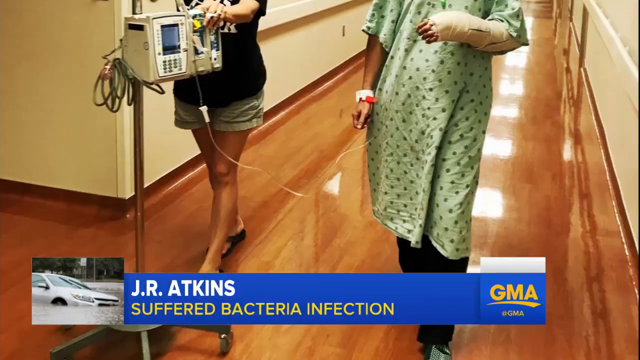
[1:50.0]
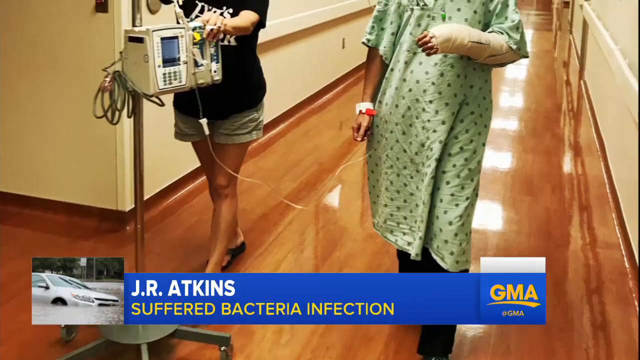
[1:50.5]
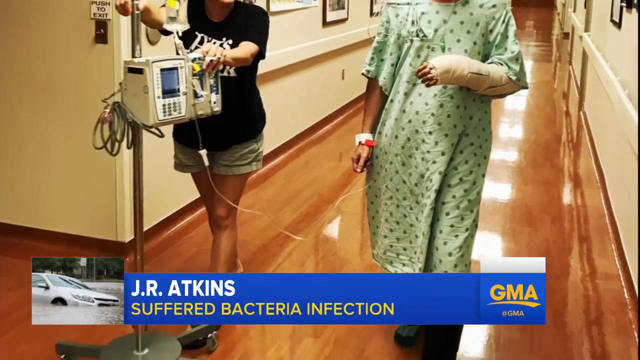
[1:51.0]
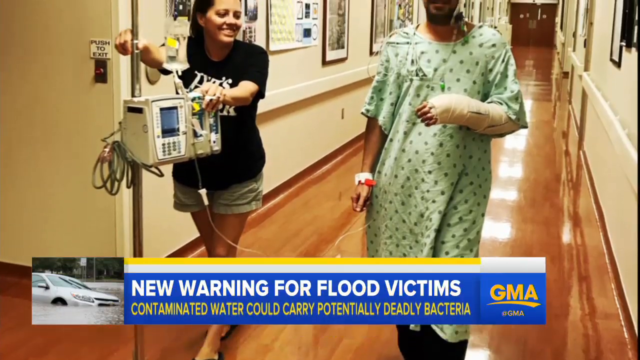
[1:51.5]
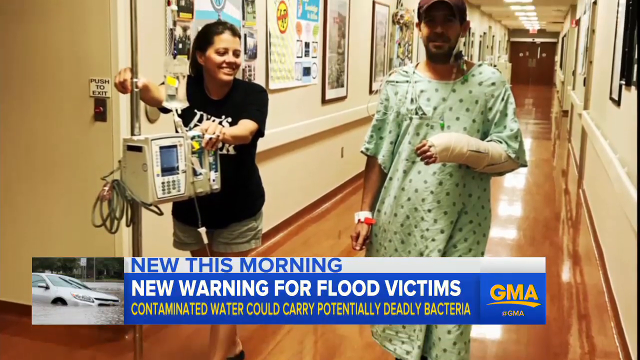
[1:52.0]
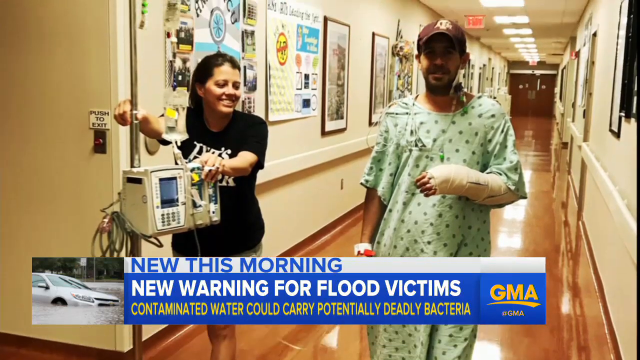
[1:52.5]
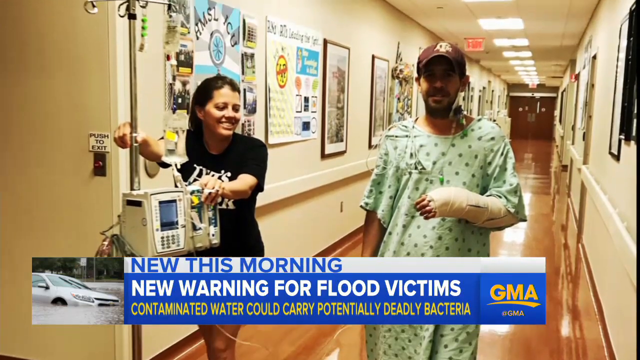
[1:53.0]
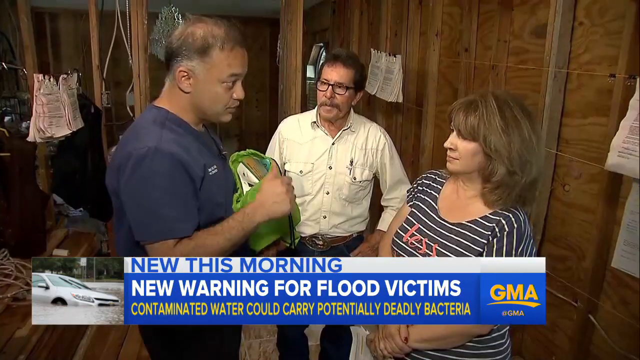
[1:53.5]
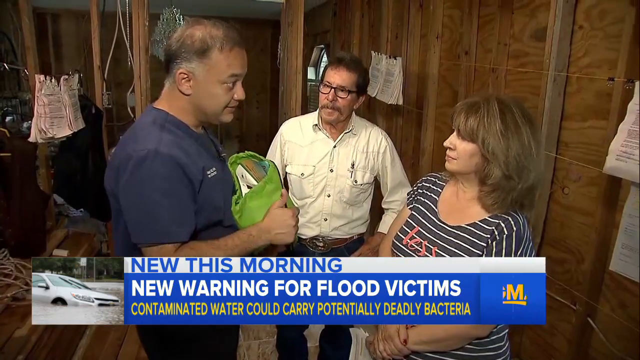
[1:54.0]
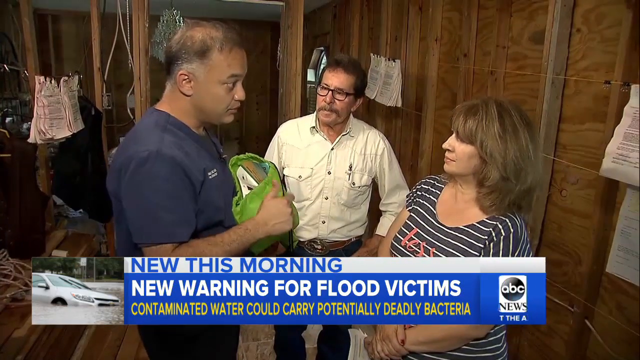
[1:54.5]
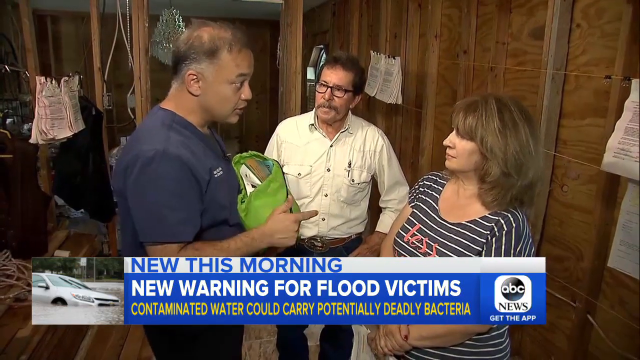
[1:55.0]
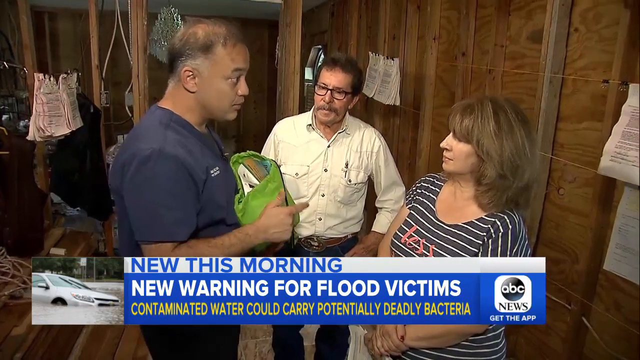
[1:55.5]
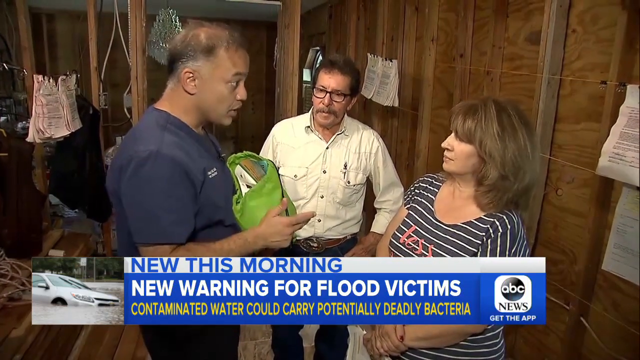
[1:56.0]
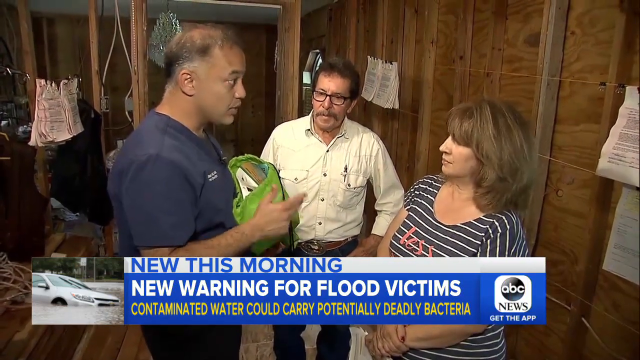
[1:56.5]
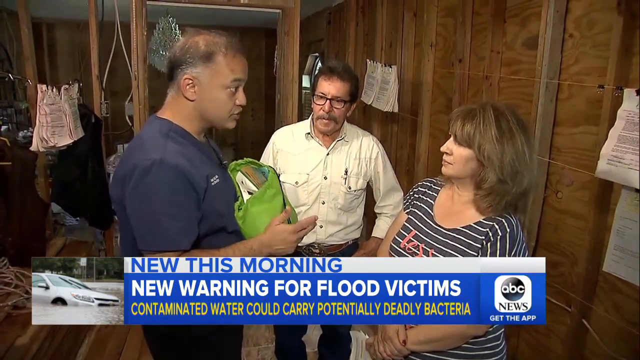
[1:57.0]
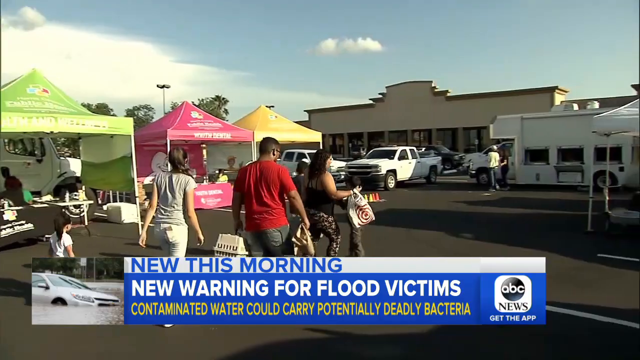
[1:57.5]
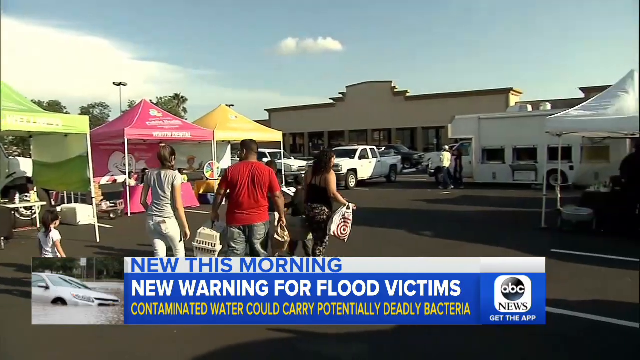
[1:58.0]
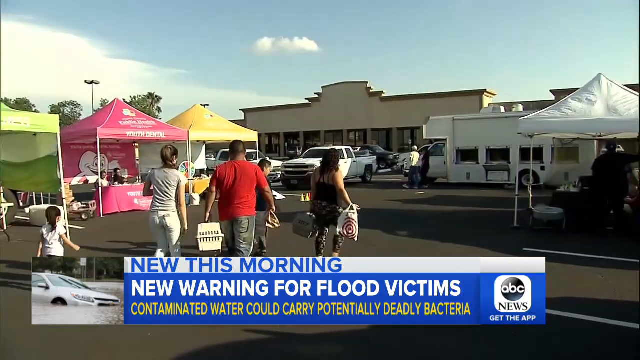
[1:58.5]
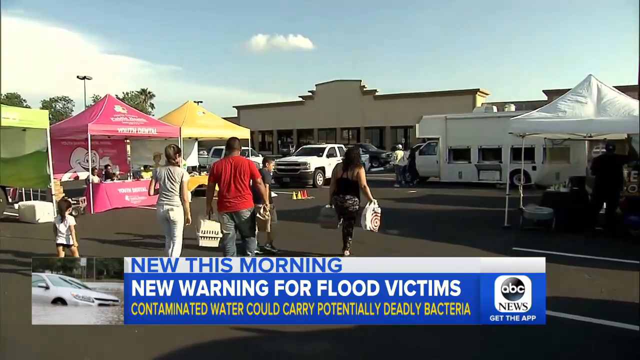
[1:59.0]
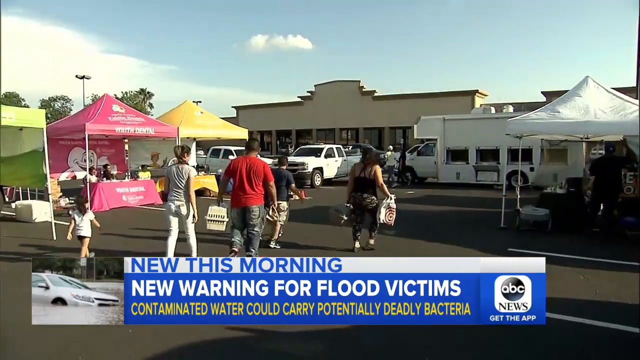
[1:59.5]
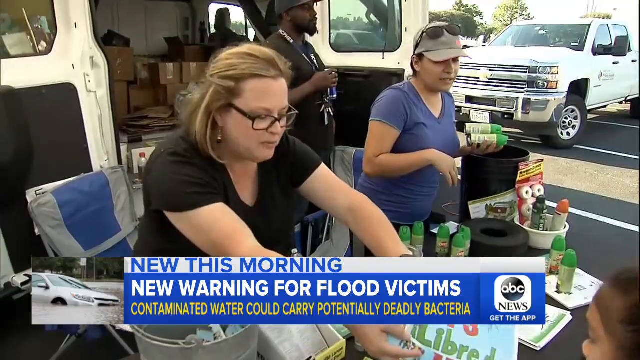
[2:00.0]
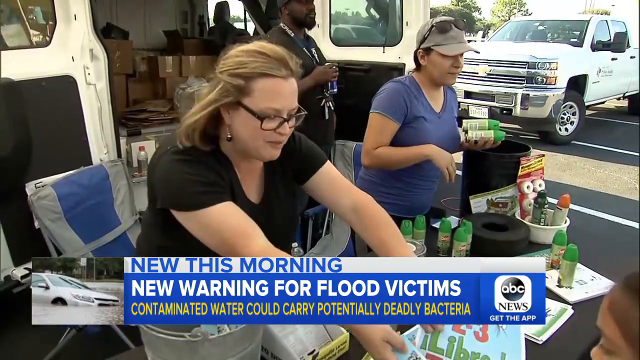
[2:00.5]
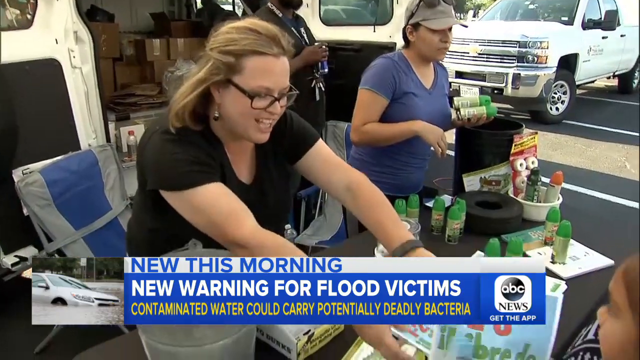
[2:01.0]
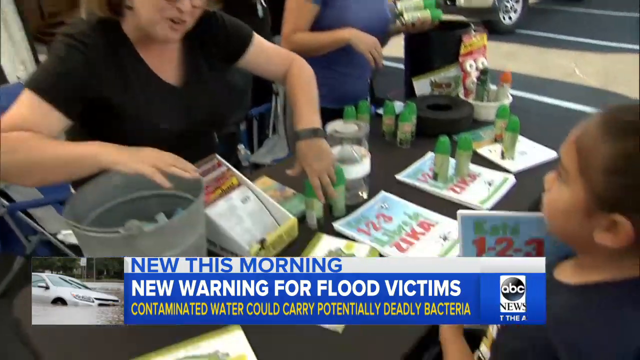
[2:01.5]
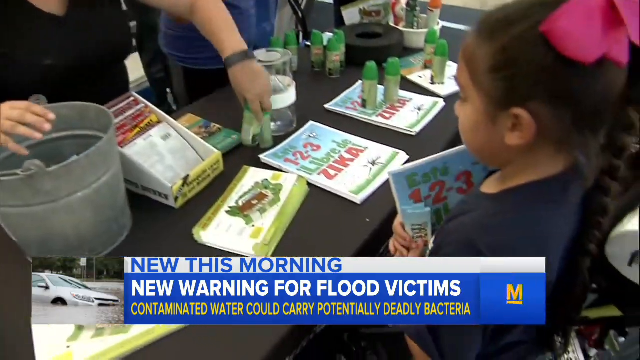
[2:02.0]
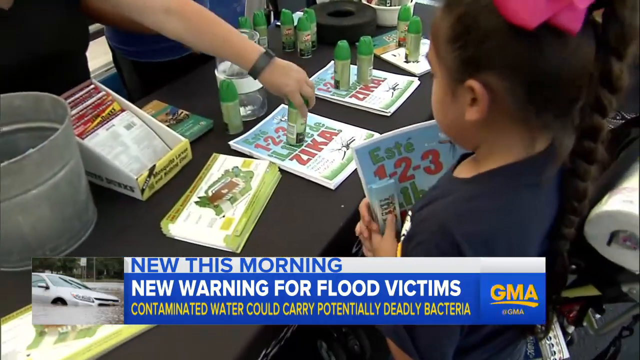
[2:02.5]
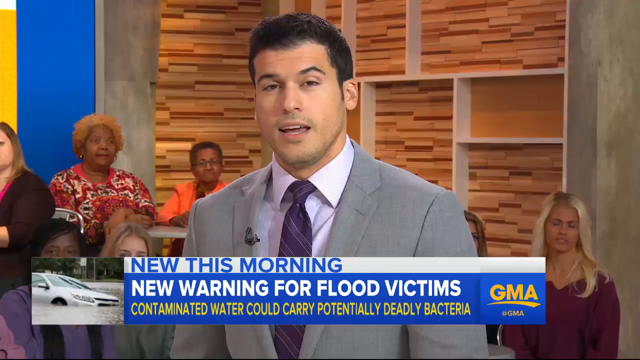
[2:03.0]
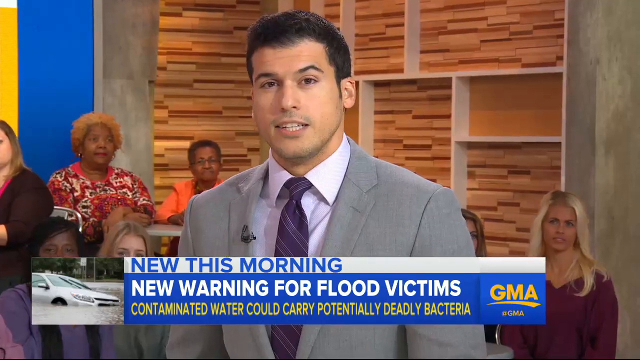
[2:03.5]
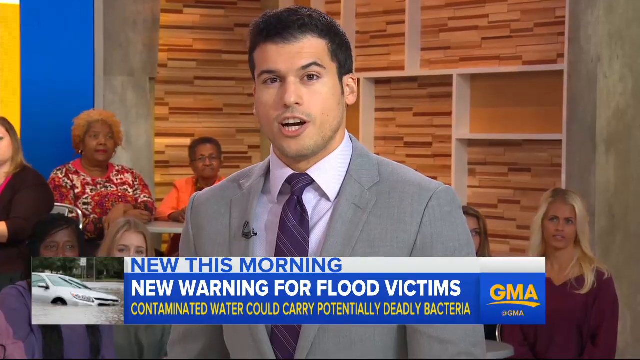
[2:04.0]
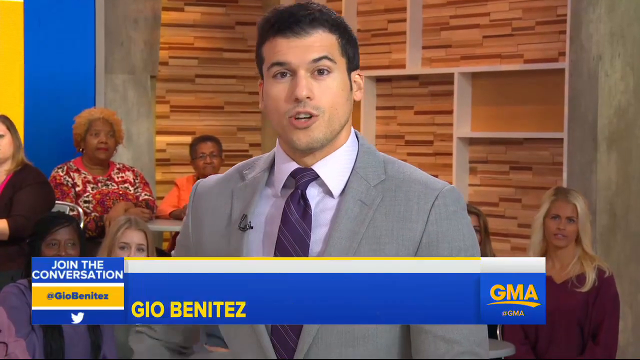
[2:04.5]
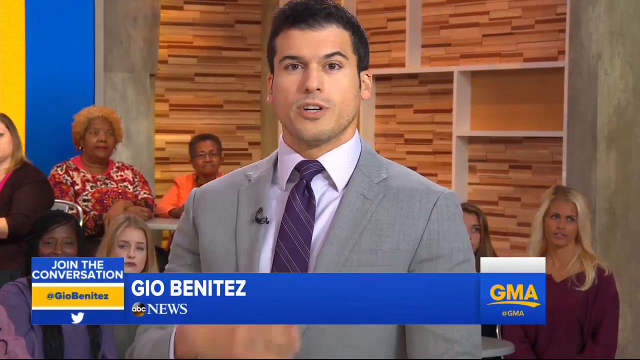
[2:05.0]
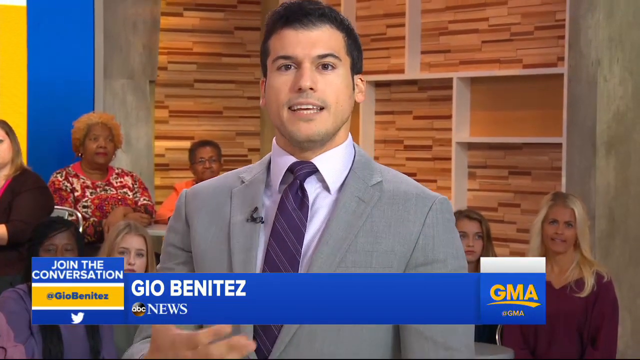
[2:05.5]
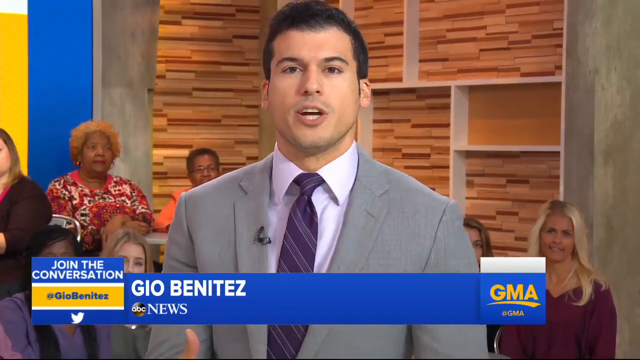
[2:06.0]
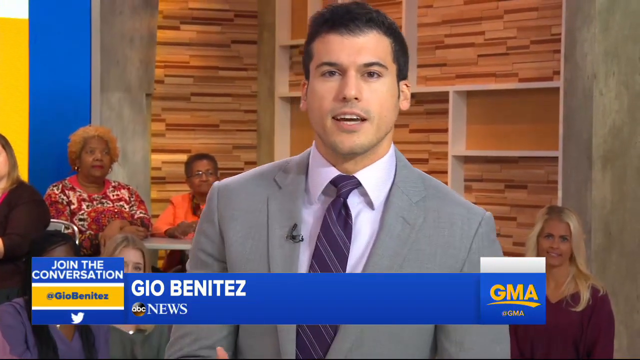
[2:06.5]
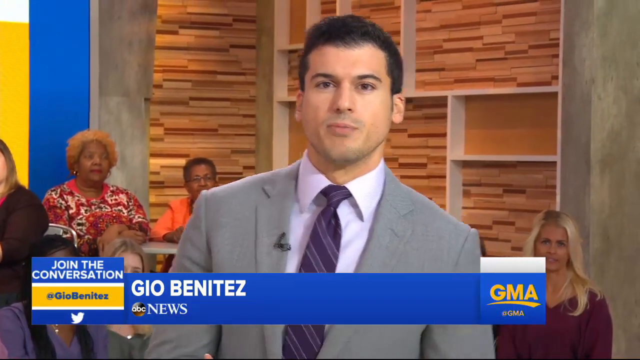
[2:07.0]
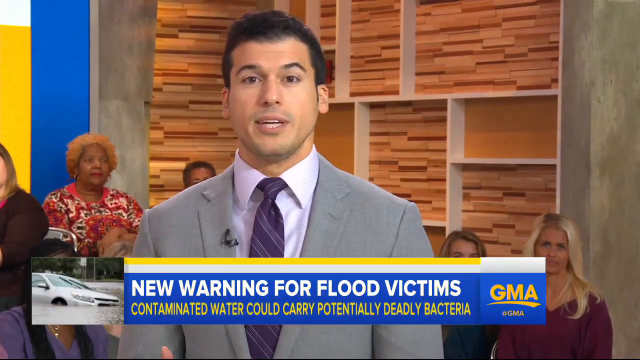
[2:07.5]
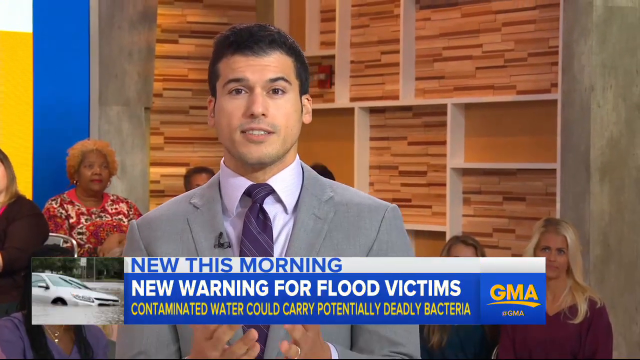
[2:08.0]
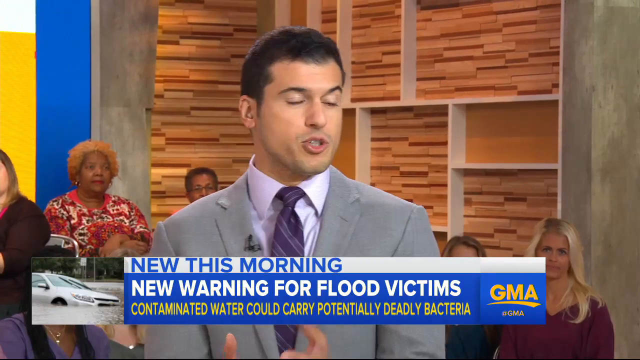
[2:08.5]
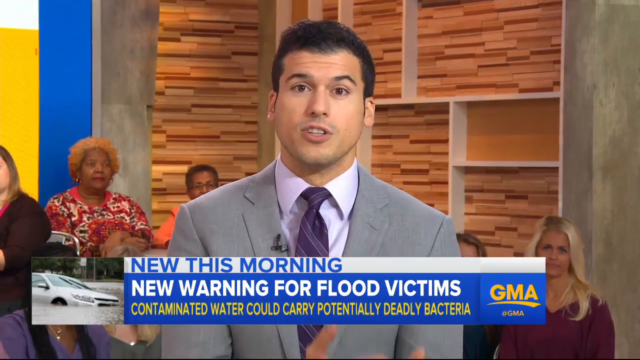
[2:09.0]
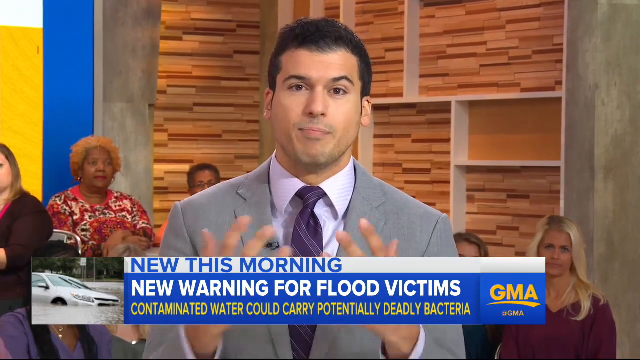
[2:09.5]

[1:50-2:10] This Good Morning America news report concerns dangerous bacteria in floodwaters. A man is interviewed while standing on the shores of a lake, talking to someone off camera. A text bar at the bottom of the screen identifies him as "J.R. Atkins, Suffered bacteria infection," with the GMA logo on the right side of the banner. Photographs follow of a man in a hospital gown walking down a hospital hallway, his left arm heavily bandaged, while a woman walks next to him pushing a monitor with an IV bag attached to it. The text bar at the bottom of the screen changes to read, "New Warning for Flood Victims, Contaminated Water Could Carry Potentially Deadly Bacteria." Scenes follow of a man speaking to a couple inside a gutted home, and then of people walking around a parking lot picking up items from display tents; the items look like they are intended to disinfect homes or protect against infections. Someone hands out bug spray to a little girl who is also holding material with information about the Zika virus. The scene then switches back to the GMA studio, where a presenter identified as Gio Benitez speaks to the camera with an audience of people behind him.